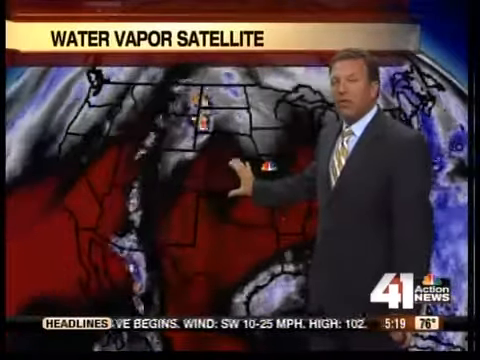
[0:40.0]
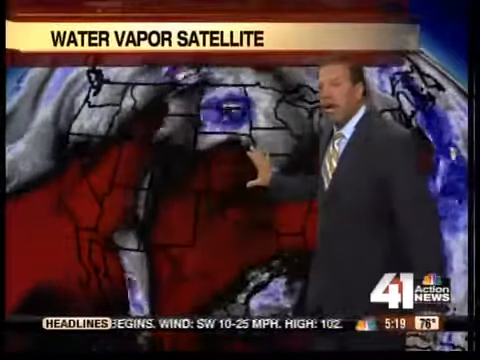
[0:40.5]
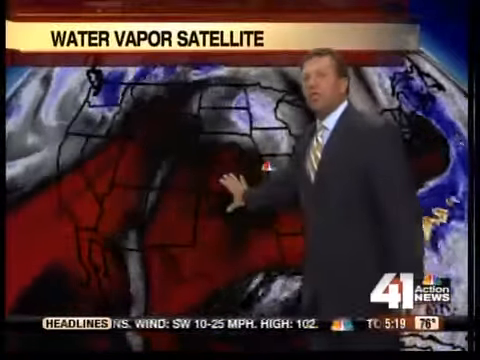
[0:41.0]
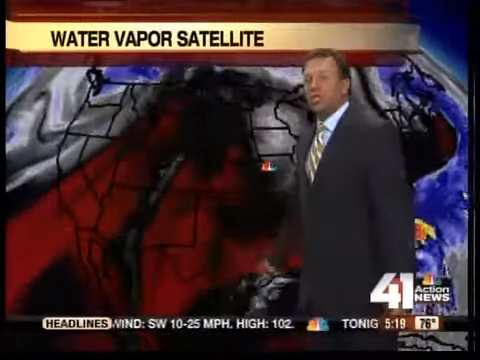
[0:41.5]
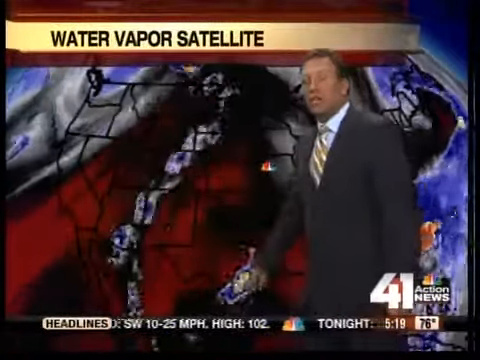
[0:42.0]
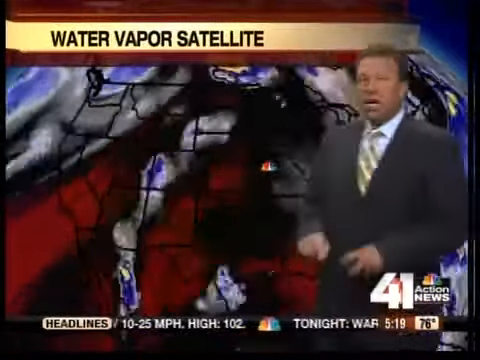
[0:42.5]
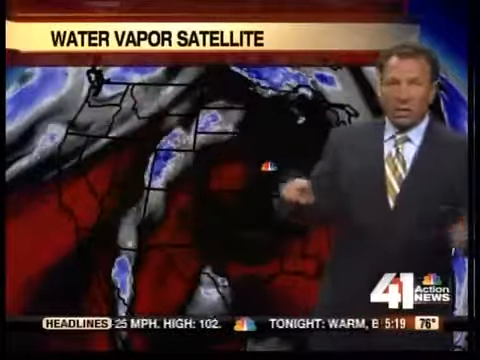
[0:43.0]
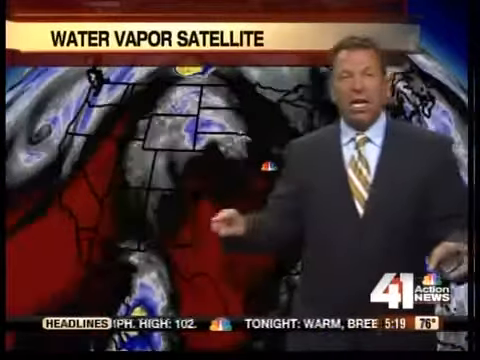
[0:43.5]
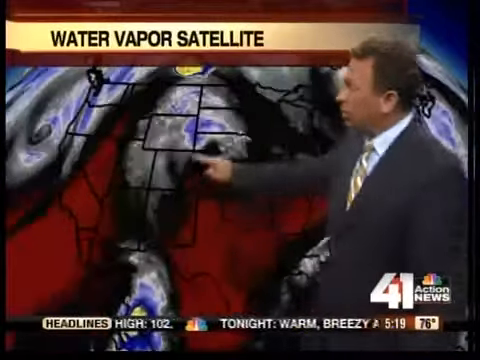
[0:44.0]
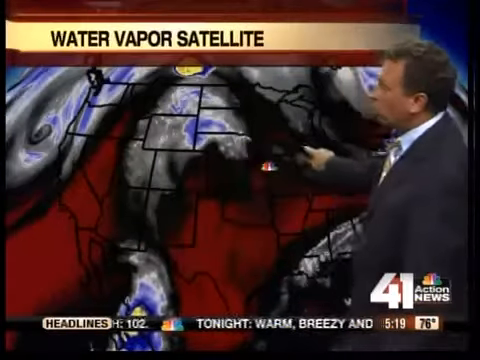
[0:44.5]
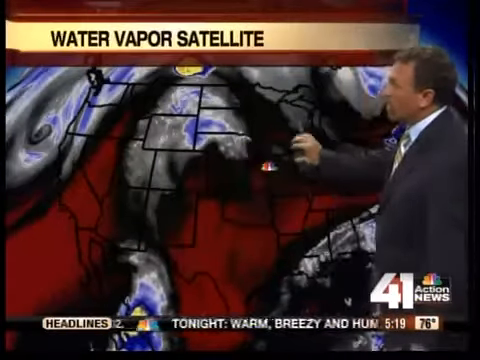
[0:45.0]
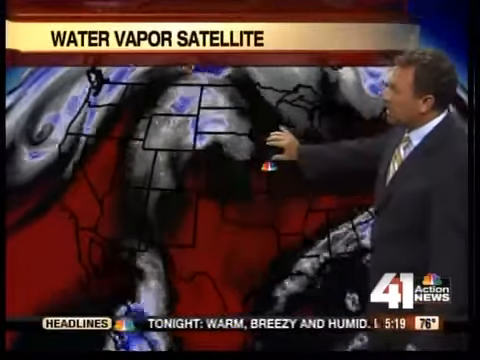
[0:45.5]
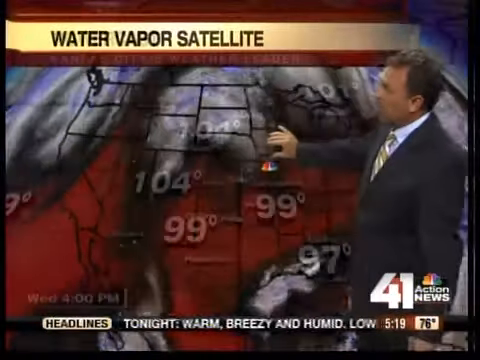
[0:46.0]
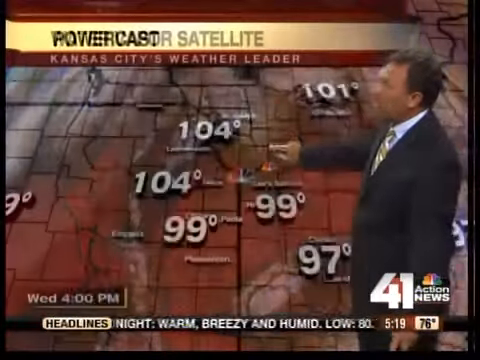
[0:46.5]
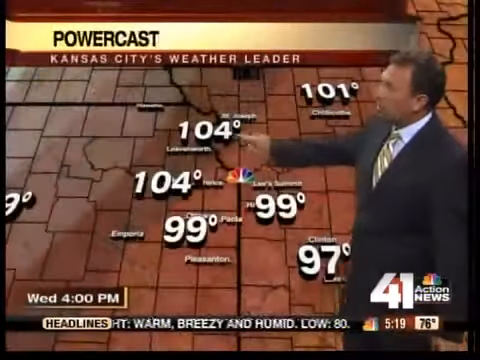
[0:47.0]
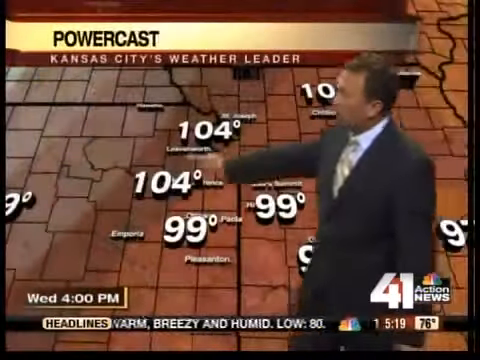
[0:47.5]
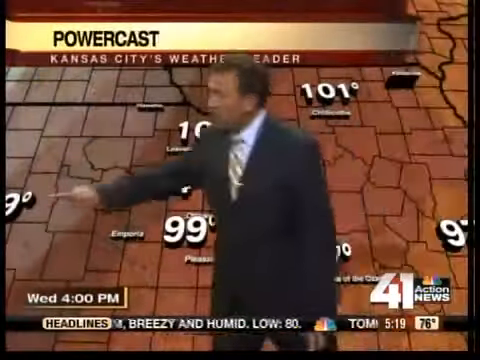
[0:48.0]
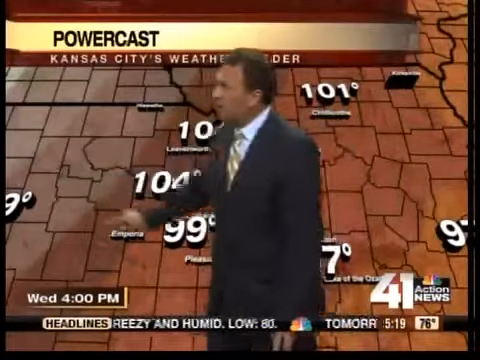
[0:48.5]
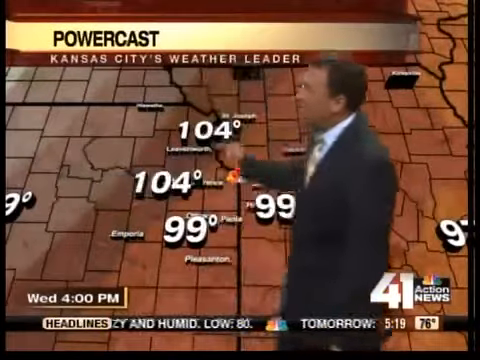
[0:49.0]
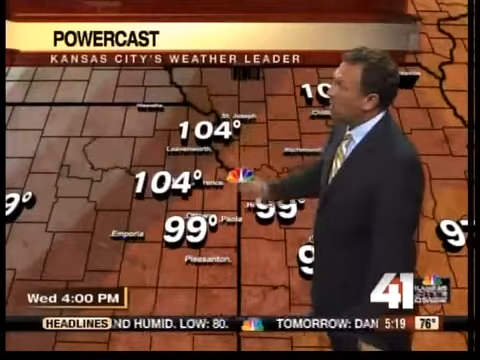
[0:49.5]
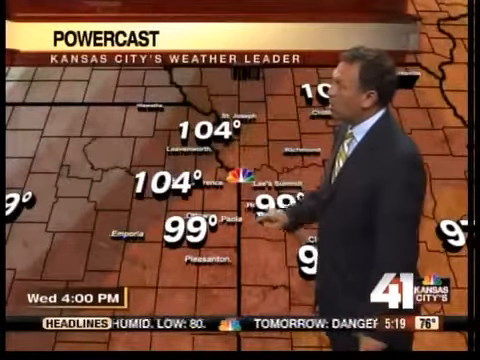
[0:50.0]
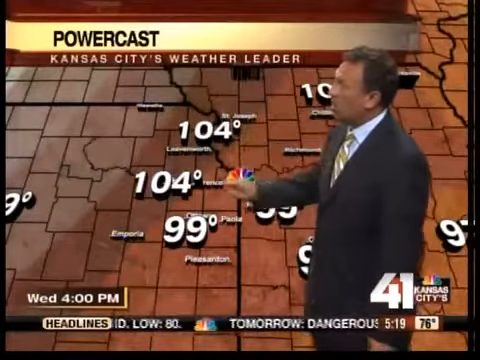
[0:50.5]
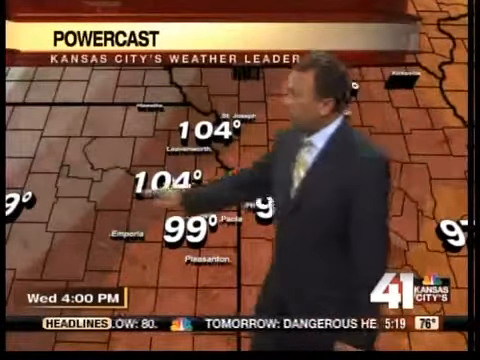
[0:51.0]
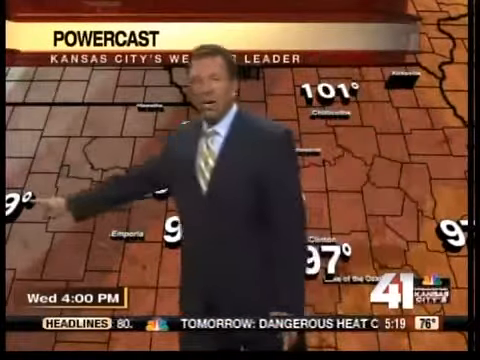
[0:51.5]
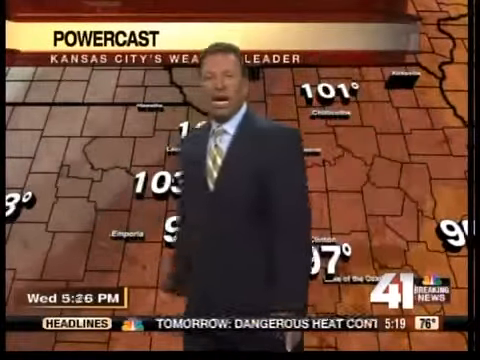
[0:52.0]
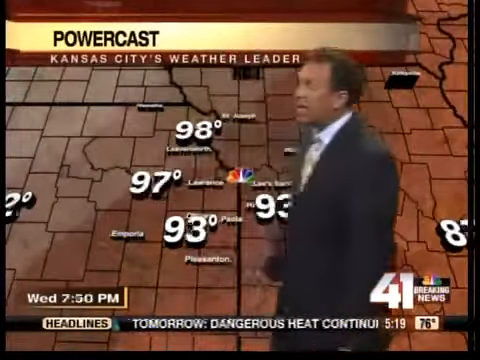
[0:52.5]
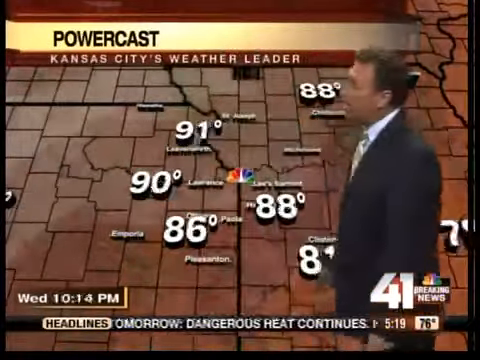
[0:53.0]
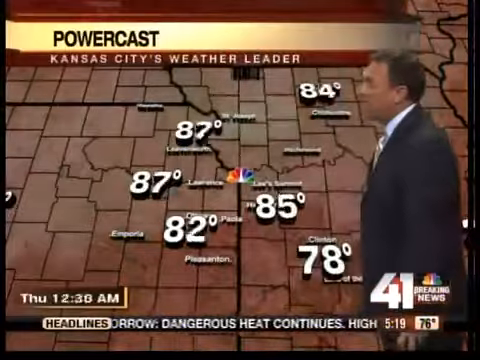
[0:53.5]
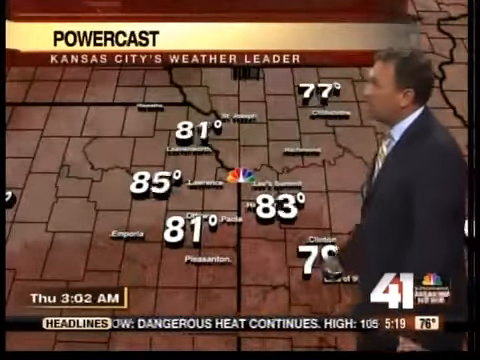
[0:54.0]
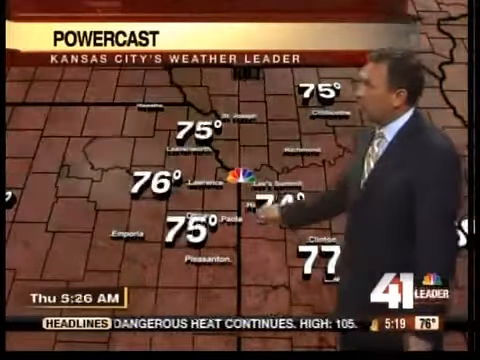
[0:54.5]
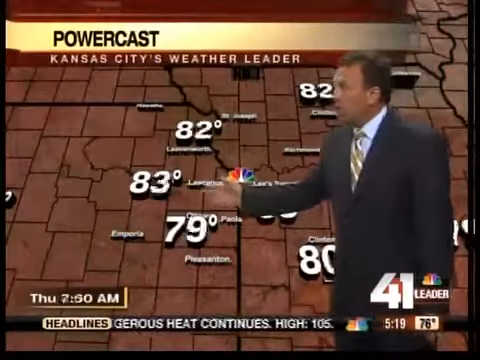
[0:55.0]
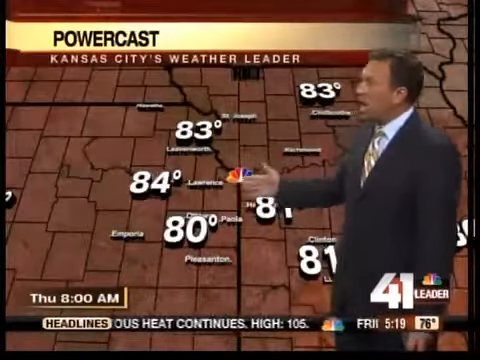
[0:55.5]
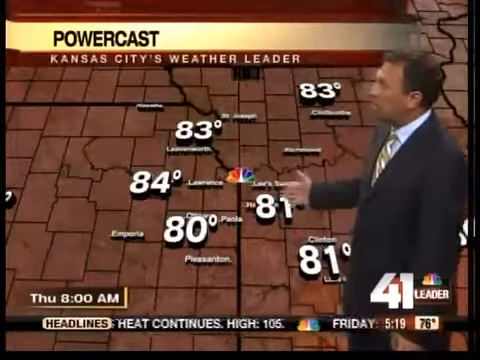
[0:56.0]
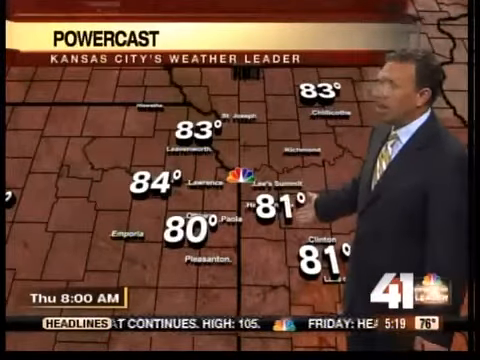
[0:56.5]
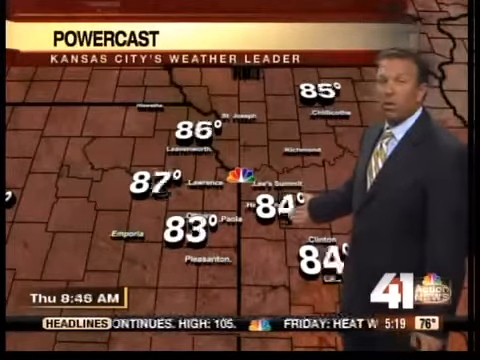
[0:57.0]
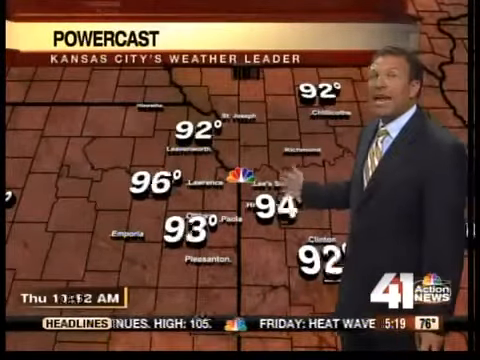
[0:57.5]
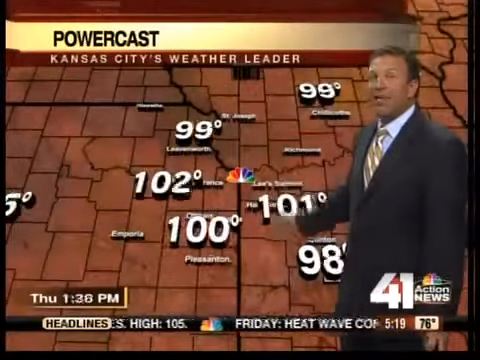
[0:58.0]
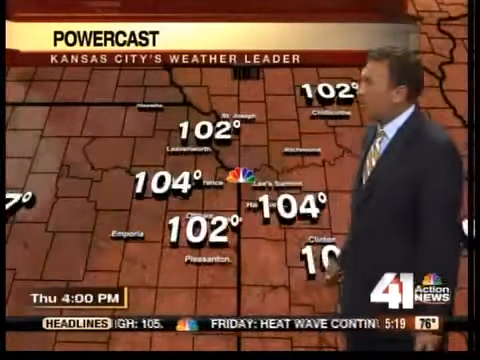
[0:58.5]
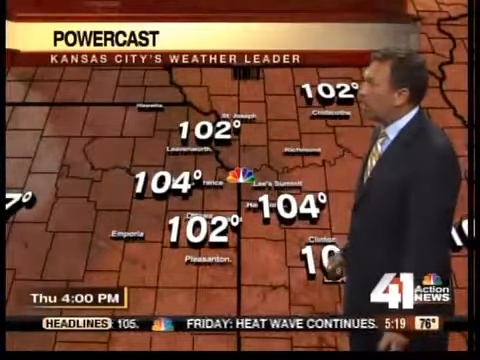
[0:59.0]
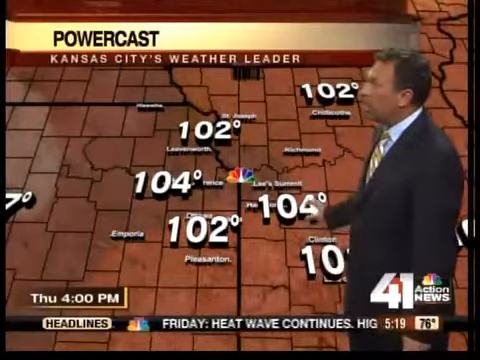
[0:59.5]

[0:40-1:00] The map of the United States remains on screen. The top half looks gray and the bottom is red. All of the red moves, seemingly toward the northeast. In the center of the country, the Midwest, there is a gray area with some purple in it that swirls toward the right side. The news anchor points out the red at the bottom toward Texas with his right hand, then turns toward the camera and seems to walk toward it while pulling his hands apart: he brings his two pointer fingers together and then pulls them apart as if telling someone how long something is. He stops, turns toward the map, and points out some areas in the Midwest, apparently Wisconsin. The map then switches to a different map with several temperatures on it and a brownish red background. The man walks over to the left side, pointing with his right hand at a temperature in the bottom left, where only one number, a nine, is visible, and then continues pointing out other temperatures on the map.